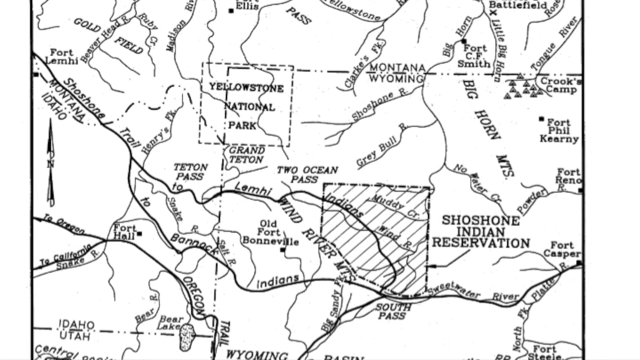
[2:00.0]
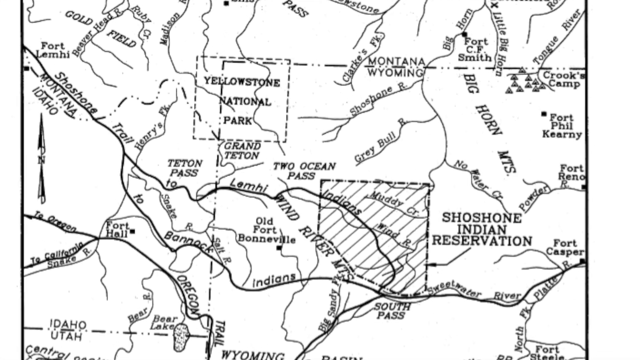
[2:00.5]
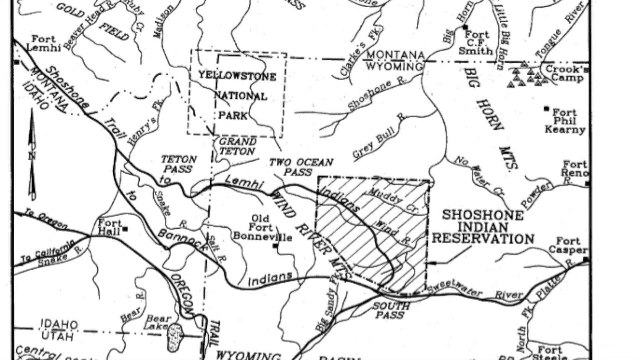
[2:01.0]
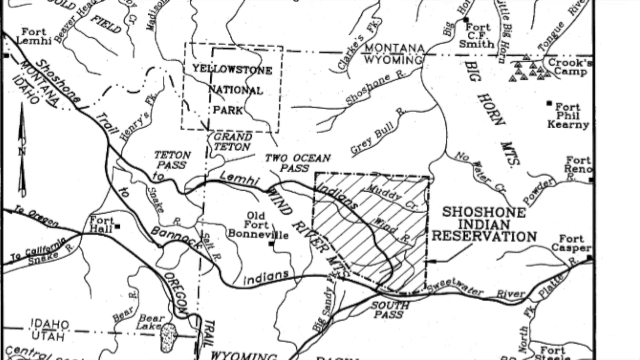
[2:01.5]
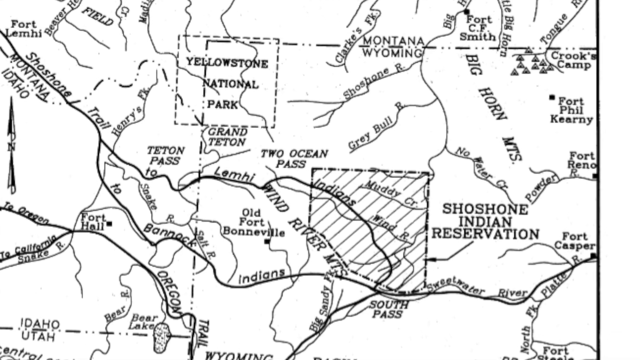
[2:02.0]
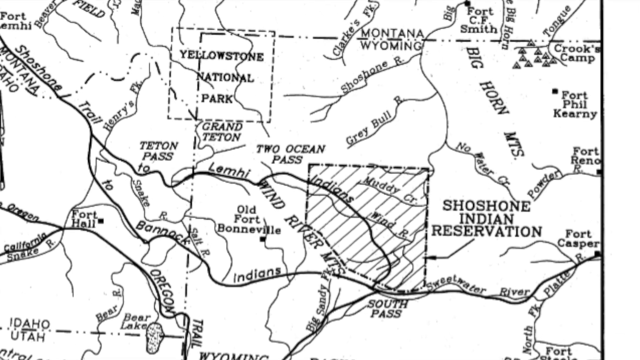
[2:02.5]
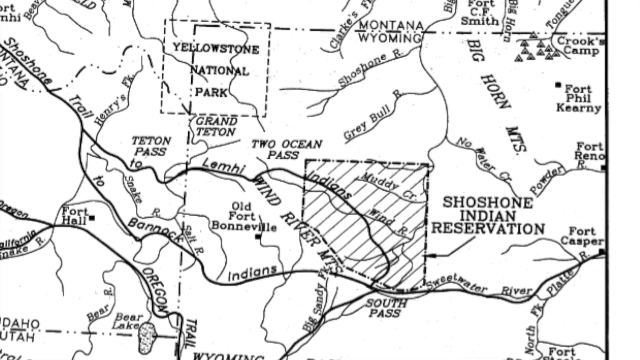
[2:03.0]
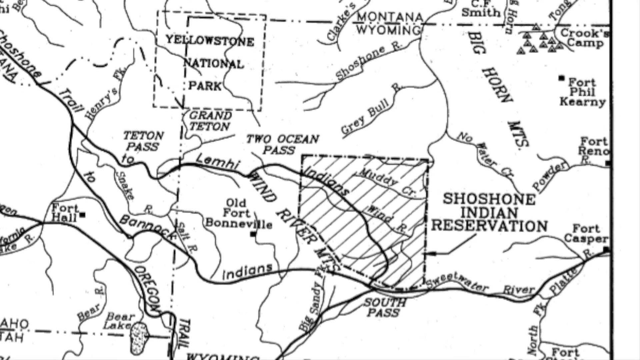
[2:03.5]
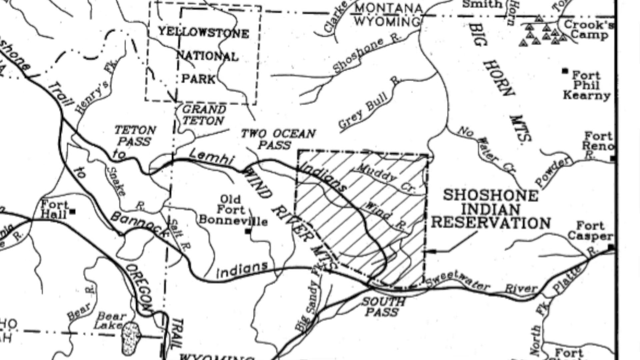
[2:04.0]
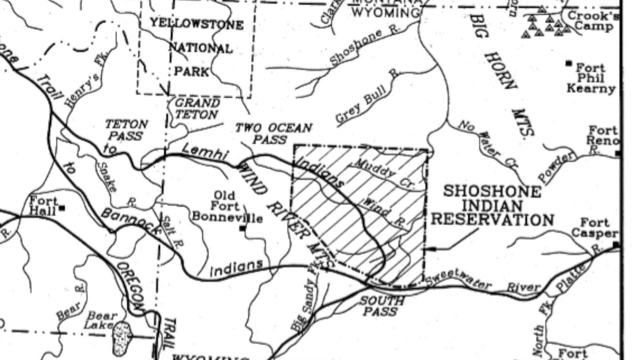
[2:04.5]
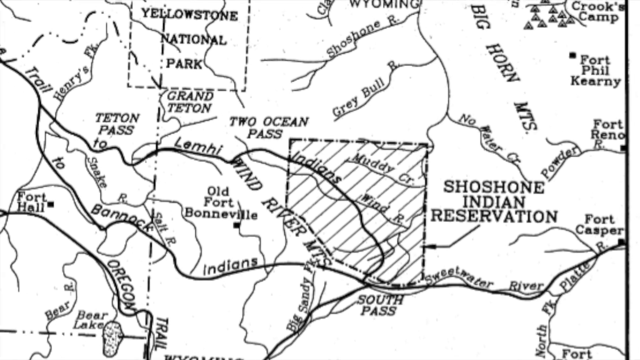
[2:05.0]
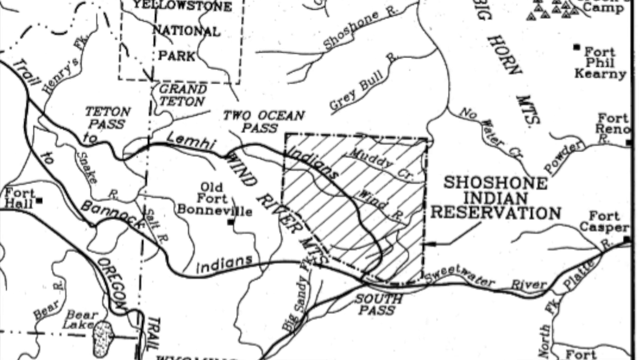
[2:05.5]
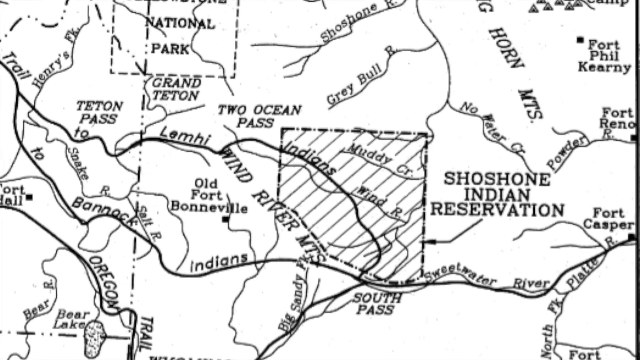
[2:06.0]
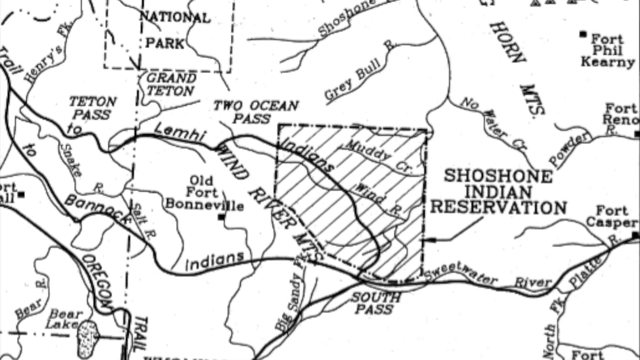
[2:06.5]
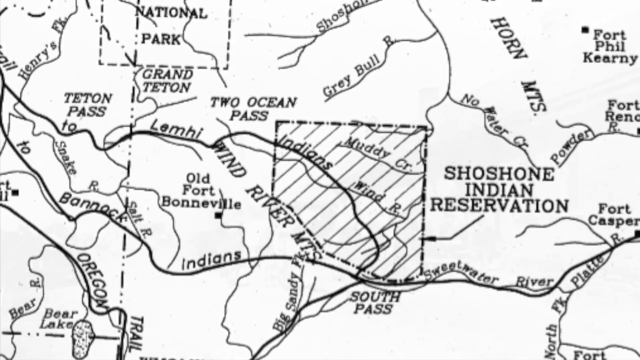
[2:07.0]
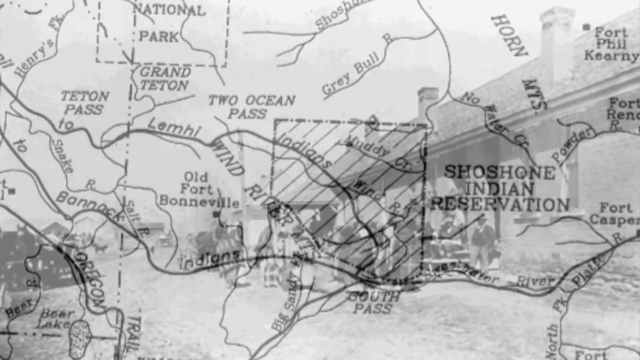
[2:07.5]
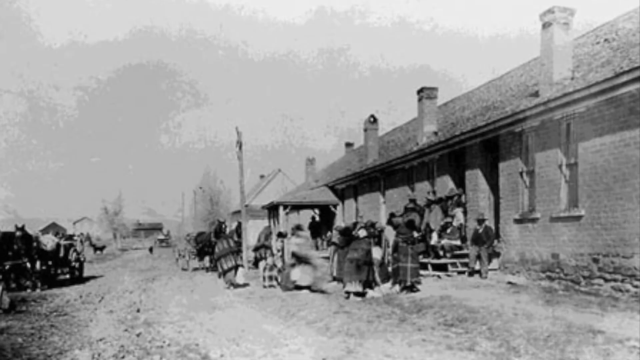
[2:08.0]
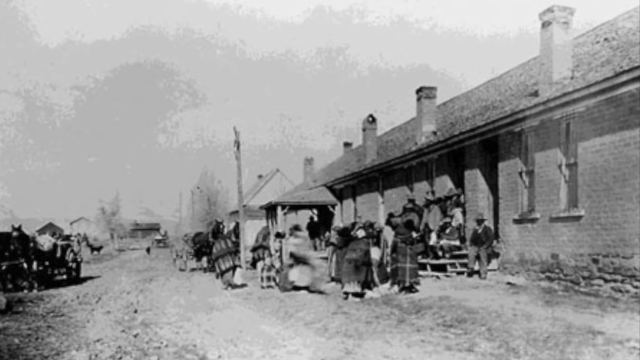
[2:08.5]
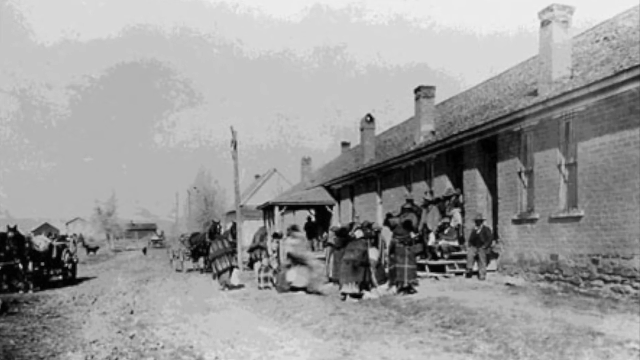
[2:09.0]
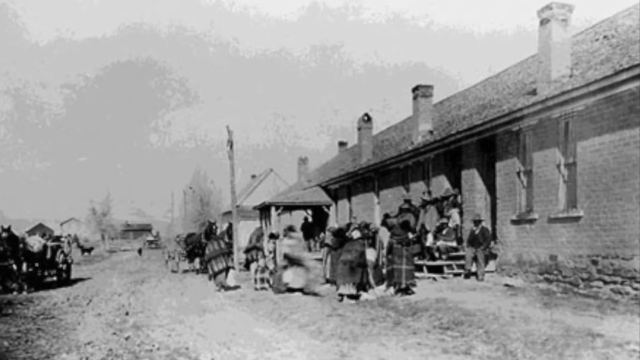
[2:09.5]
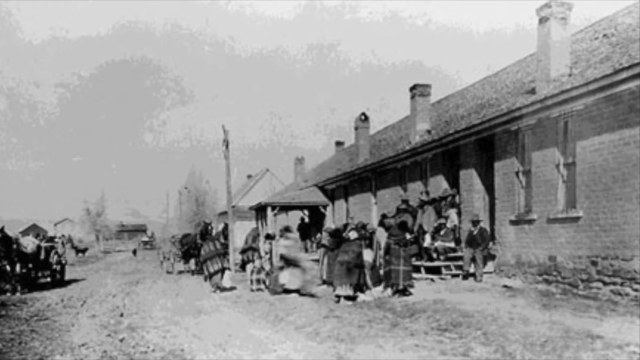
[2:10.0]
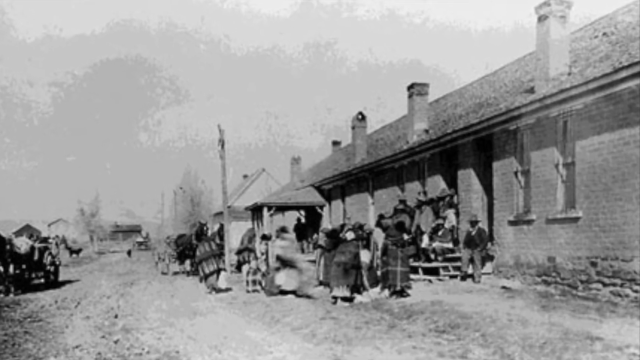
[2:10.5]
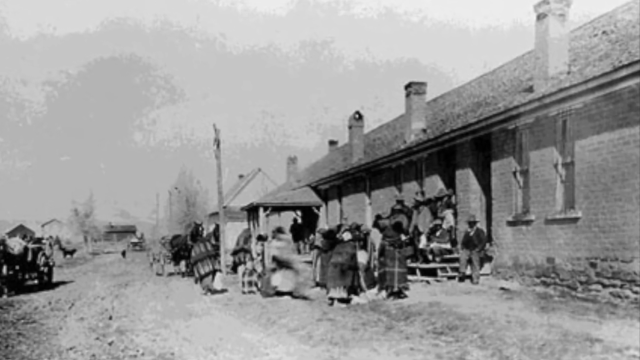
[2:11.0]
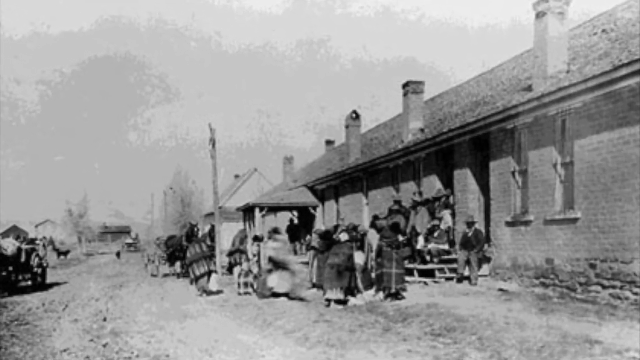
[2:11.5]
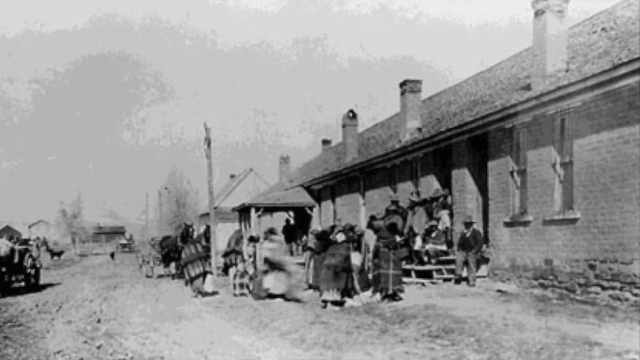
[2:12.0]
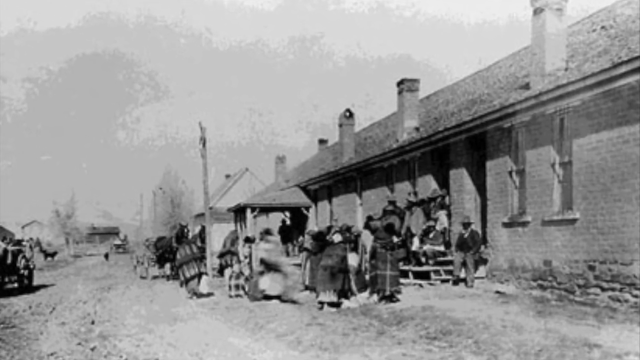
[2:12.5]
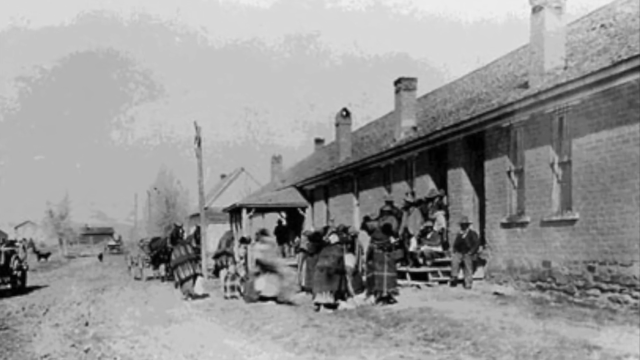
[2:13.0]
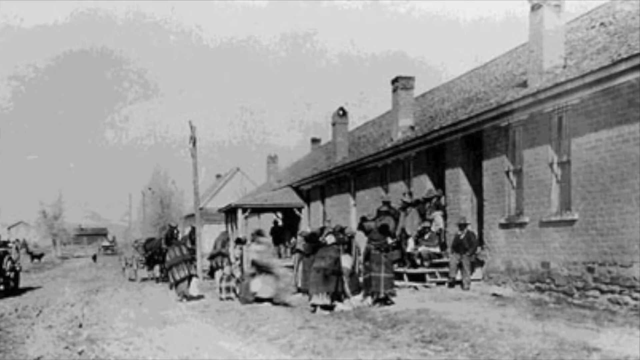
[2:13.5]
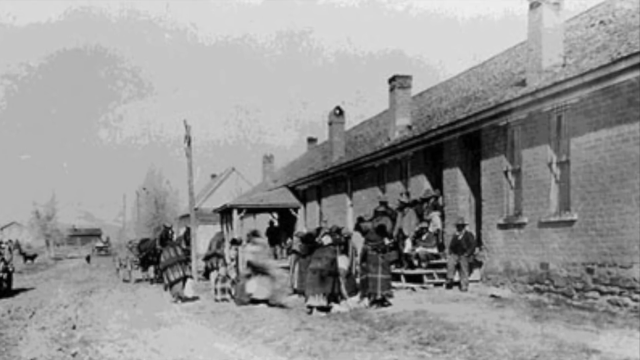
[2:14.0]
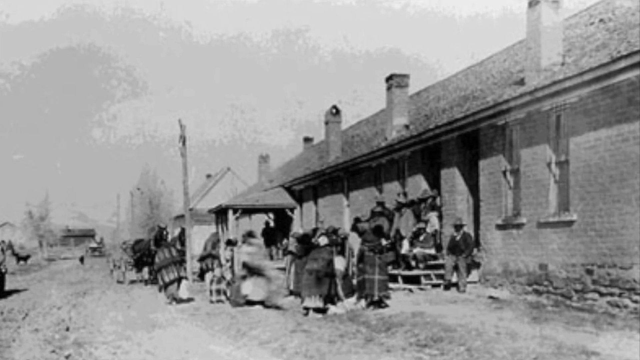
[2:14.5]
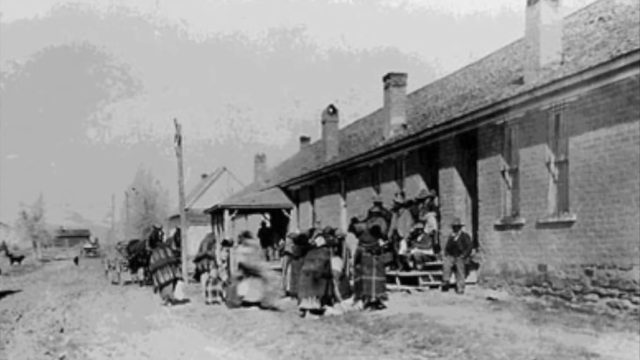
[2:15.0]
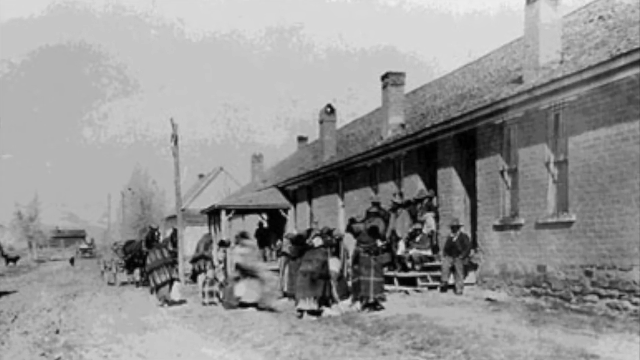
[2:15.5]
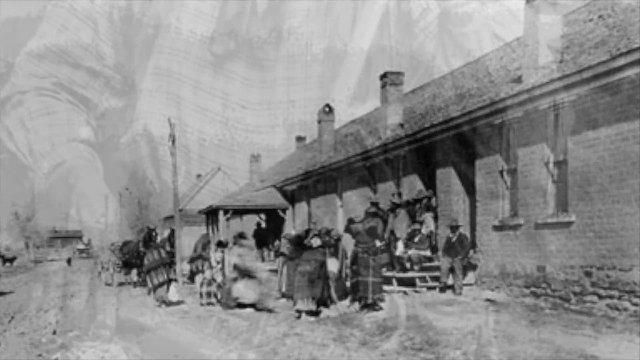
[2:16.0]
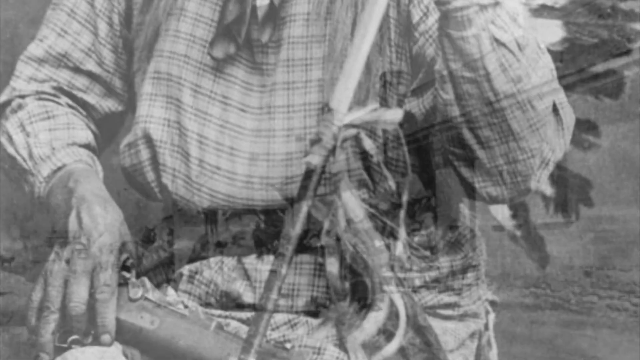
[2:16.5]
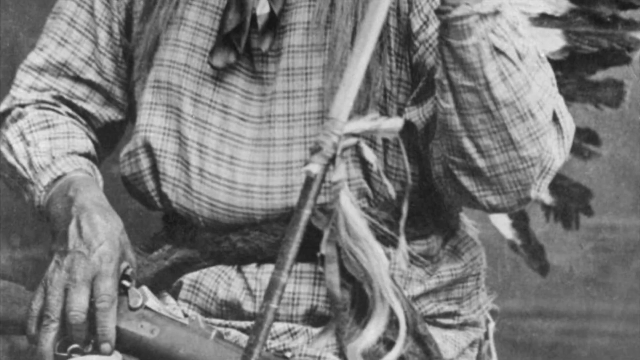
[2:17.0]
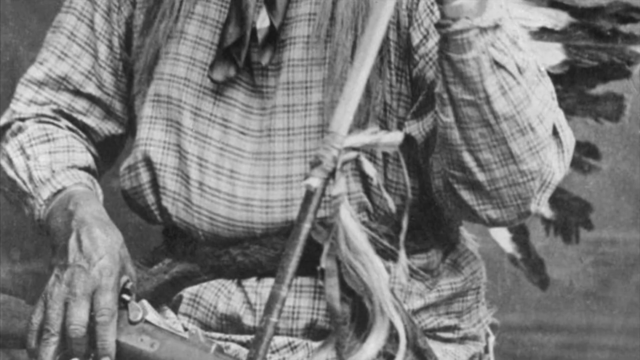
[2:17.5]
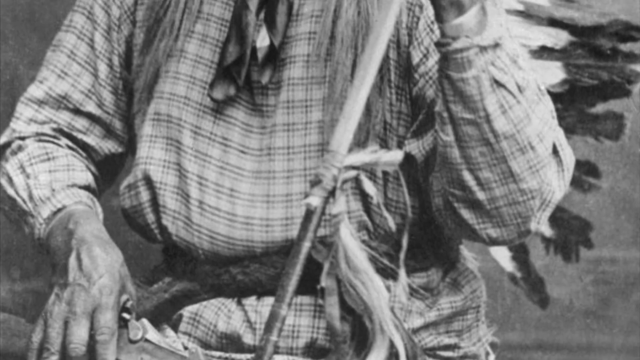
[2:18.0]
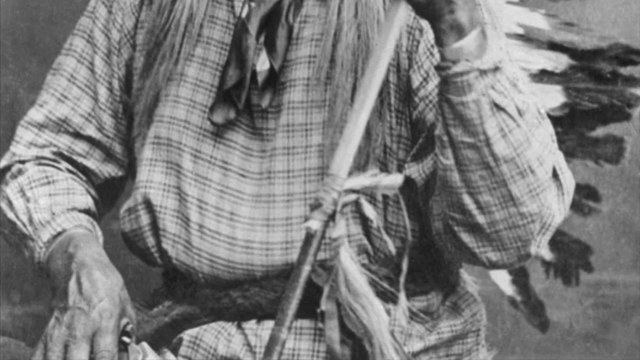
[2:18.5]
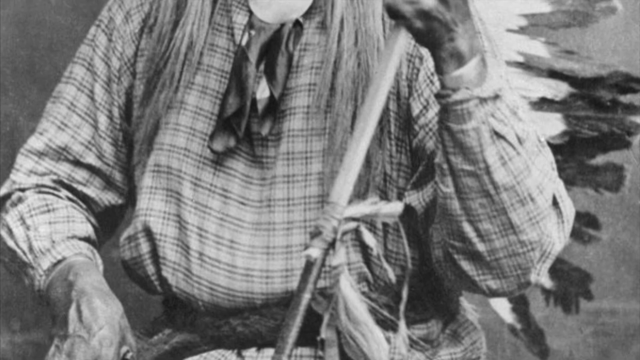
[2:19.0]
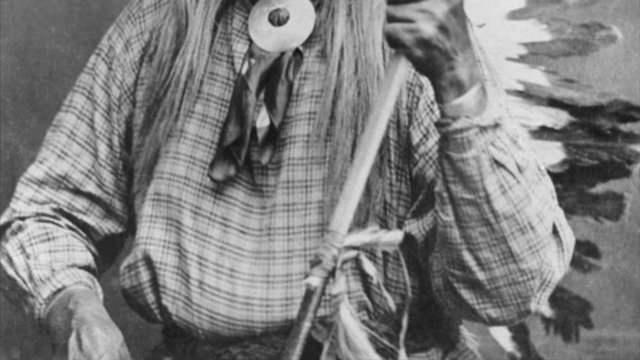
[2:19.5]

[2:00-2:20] The map has a pencil-drawn F. The boundary between Montana and Wyoming is outlined, as is Yellowstone National Park. Grand Teton is shown, the Shoshone Indian Reservation is named in the lower right, and the Bighorn Mountains are named in the upper middle right part of the map. The video transitions to an image of people standing outside a large building, probably from the mid to late 1800s, with what looks like some type of industrial building to their right. The video then transitions to an image of an Indian sitting in a chair posing for a picture, apparently holding a peace pipe.